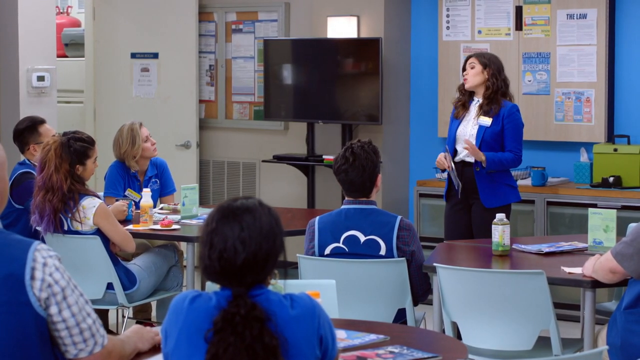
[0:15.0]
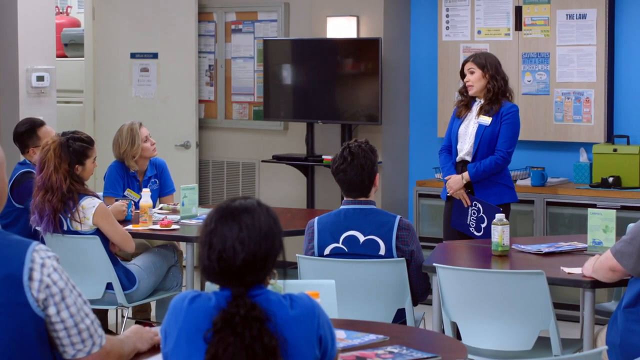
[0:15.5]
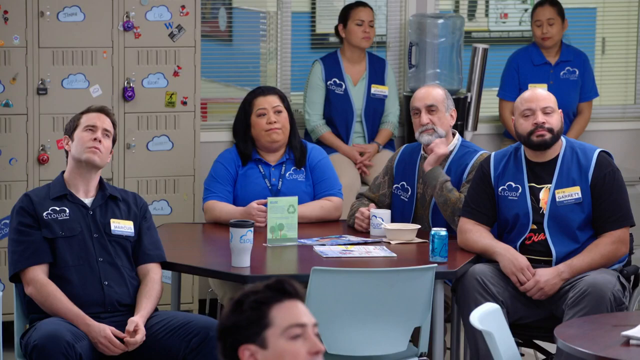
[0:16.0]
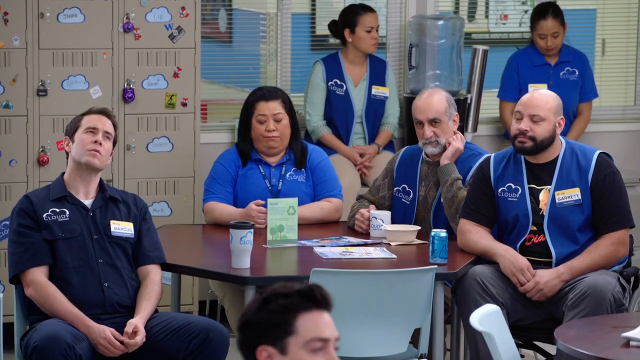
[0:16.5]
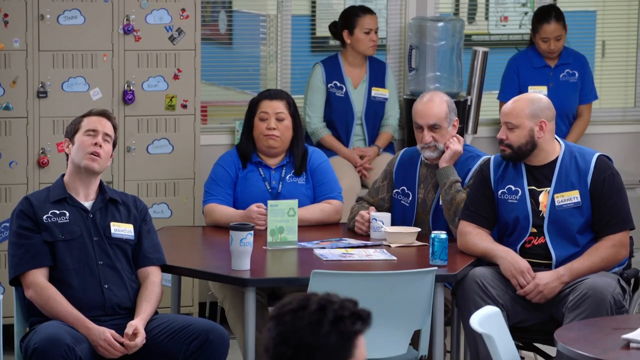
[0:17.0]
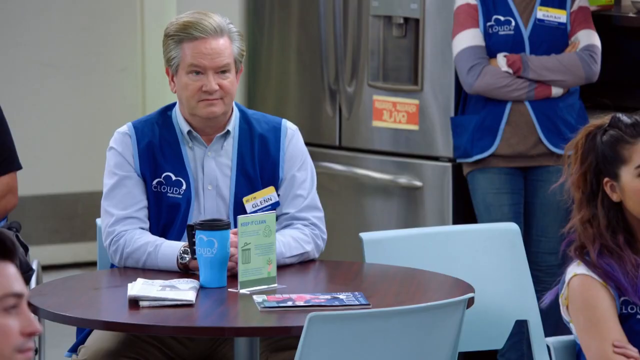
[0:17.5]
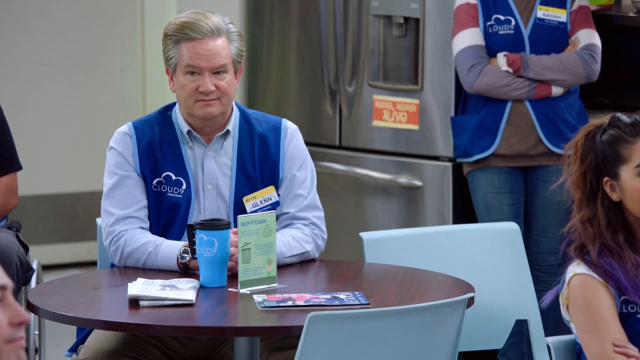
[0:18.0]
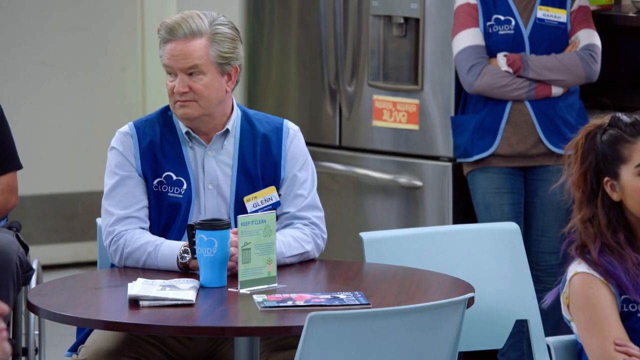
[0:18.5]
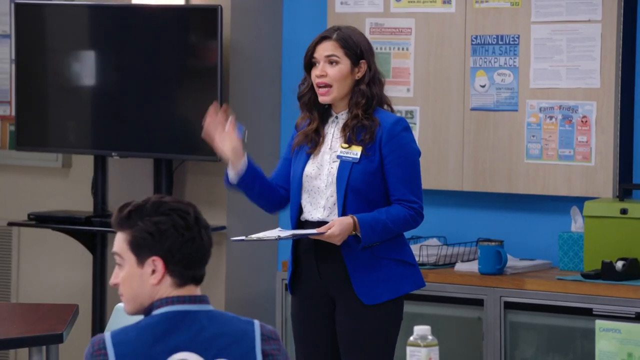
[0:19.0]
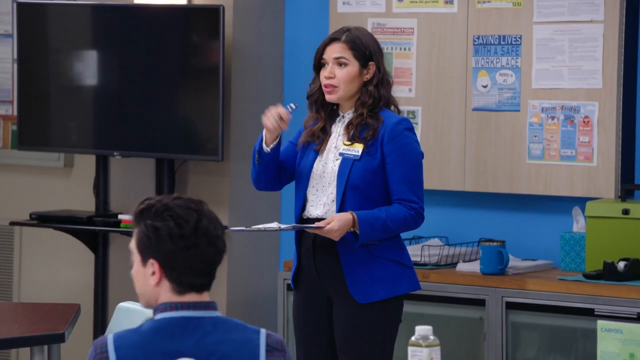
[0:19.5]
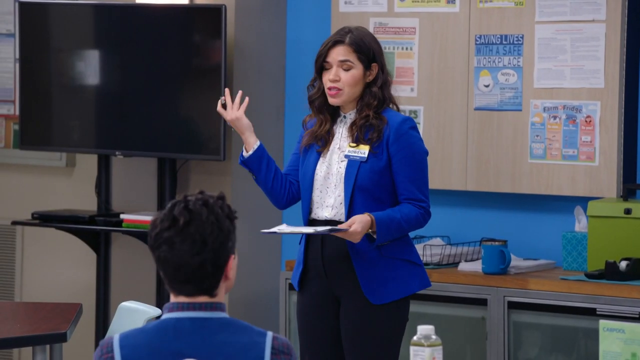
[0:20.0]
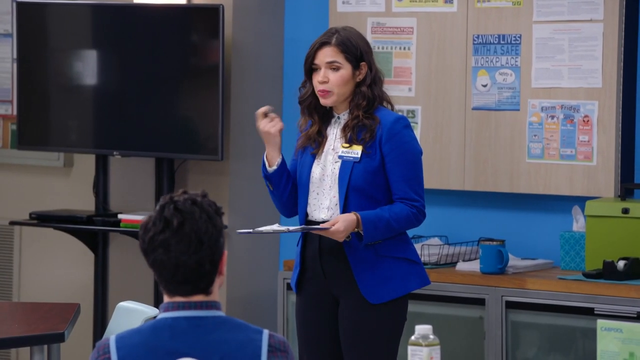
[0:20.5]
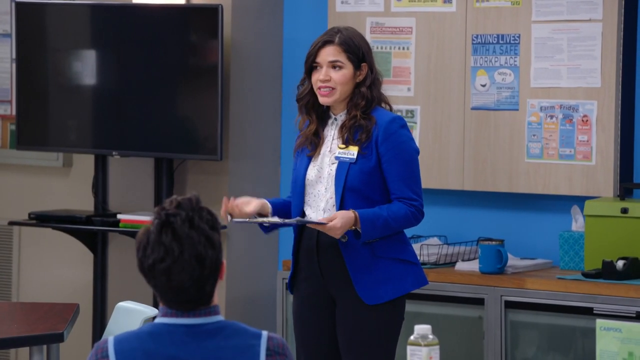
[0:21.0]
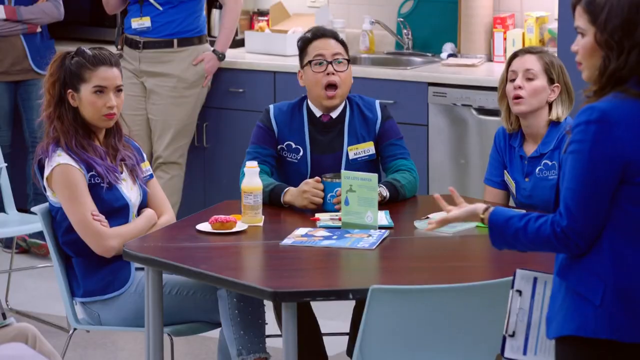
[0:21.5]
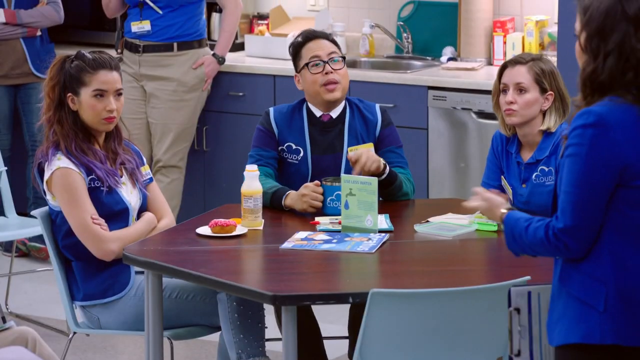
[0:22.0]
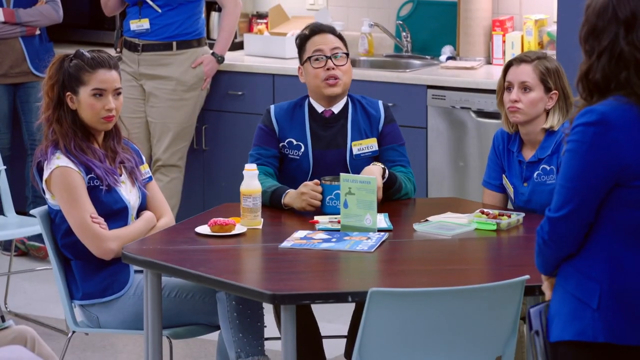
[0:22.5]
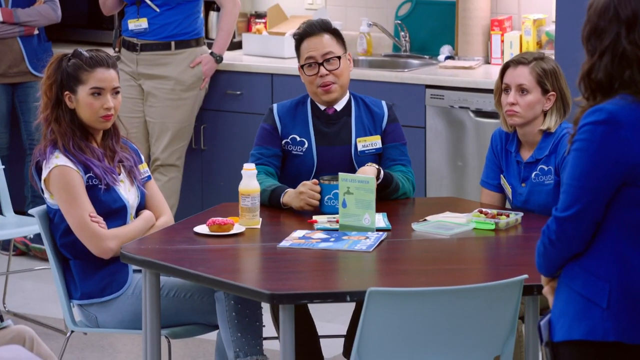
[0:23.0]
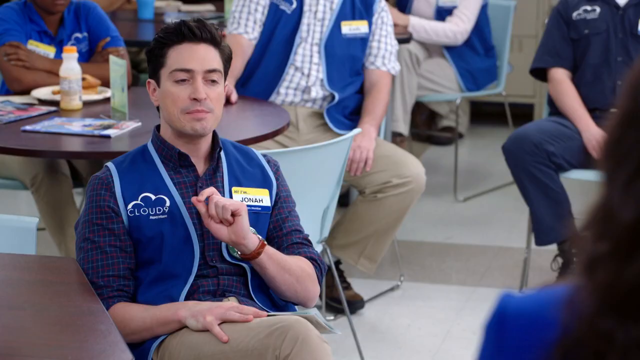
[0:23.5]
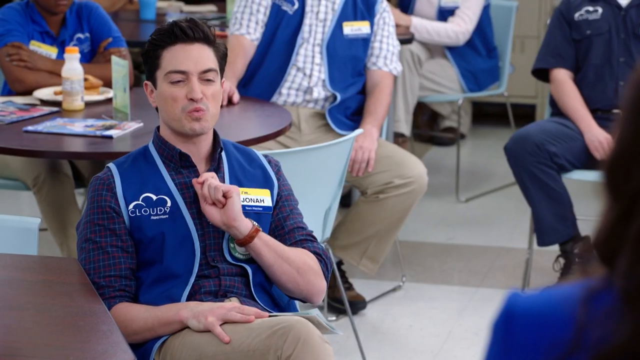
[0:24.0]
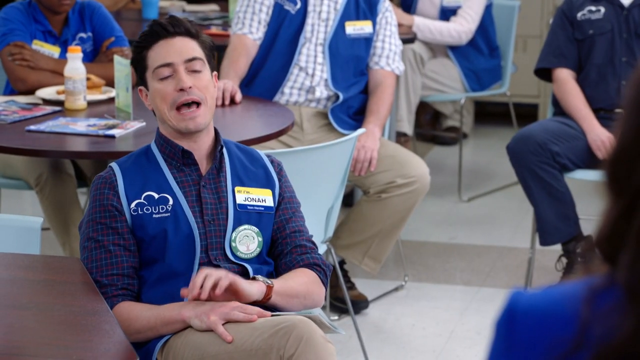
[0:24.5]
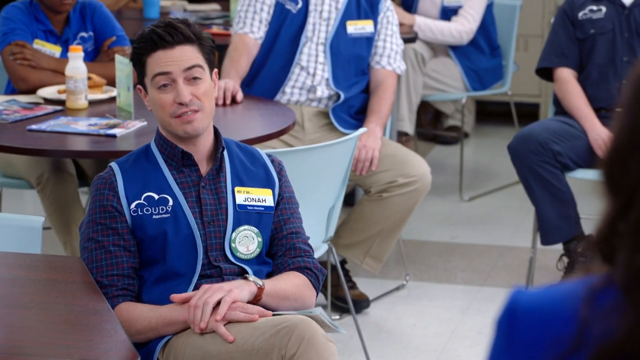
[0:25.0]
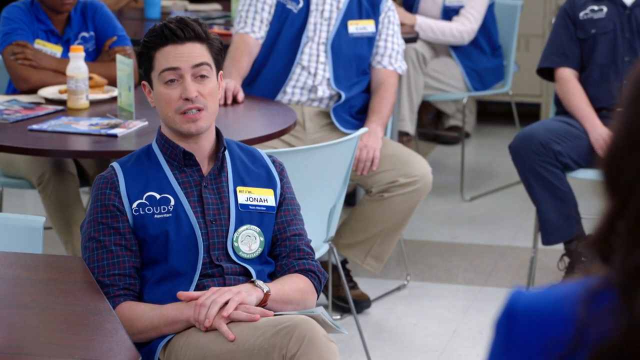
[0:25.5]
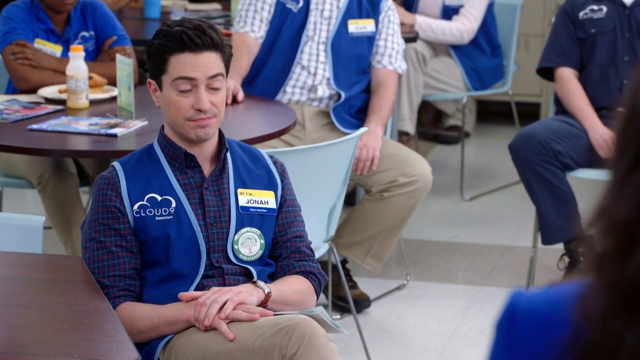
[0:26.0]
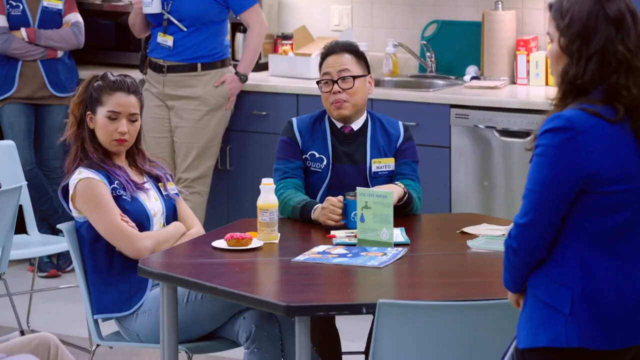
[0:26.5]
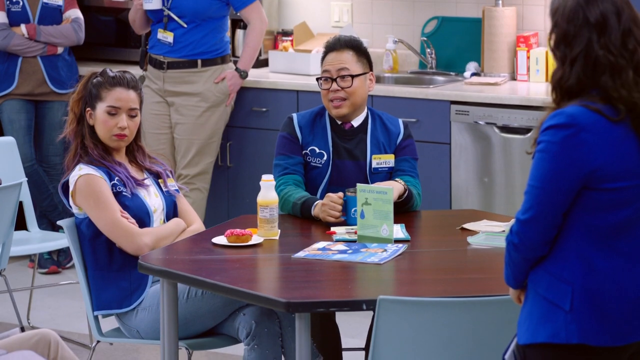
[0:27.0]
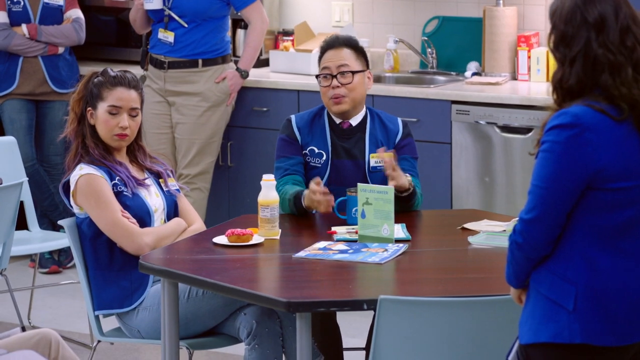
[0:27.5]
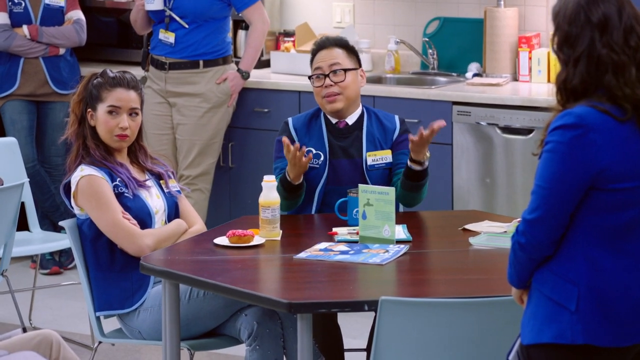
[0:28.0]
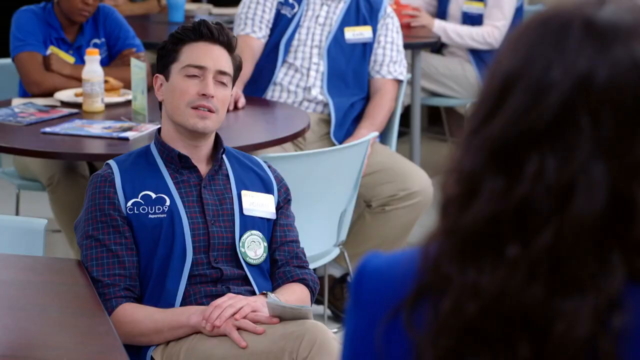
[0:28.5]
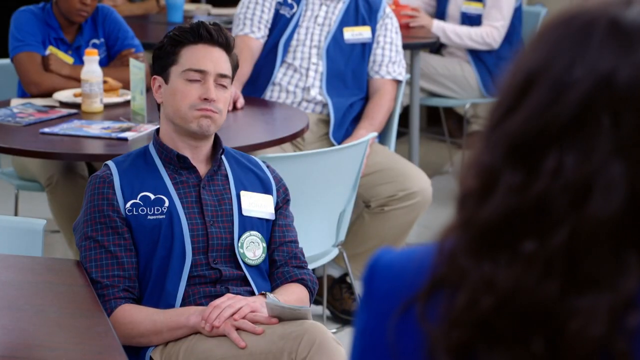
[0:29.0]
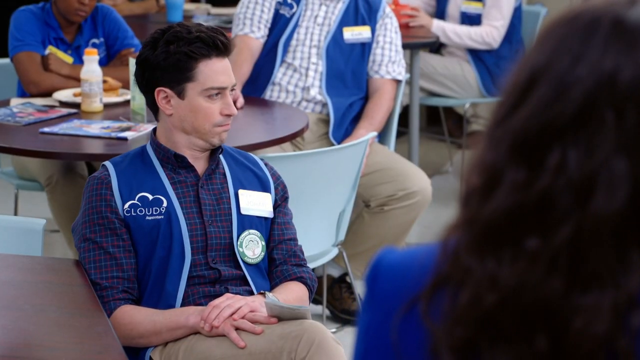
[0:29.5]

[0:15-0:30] The woman at the front of the room, in a blue jacket and black pants, seems to ask a question and make a comment, and others sitting in chairs begin replying. The camera cuts to a man in glasses sitting down and making a remark, then to a young man with slicked-back hair sitting at the front of the room, who talks and gestures with his hand. The man with glasses replies, also gesturing with his hands. The rest of the people around them sit quietly.